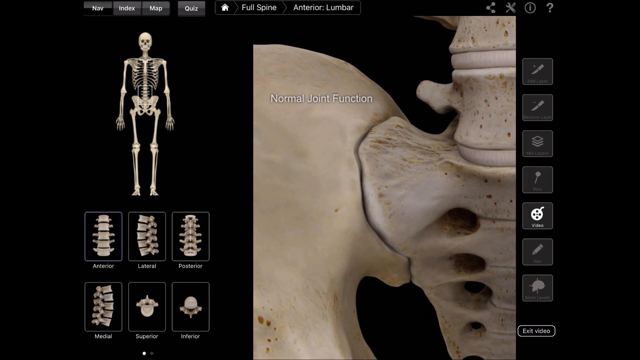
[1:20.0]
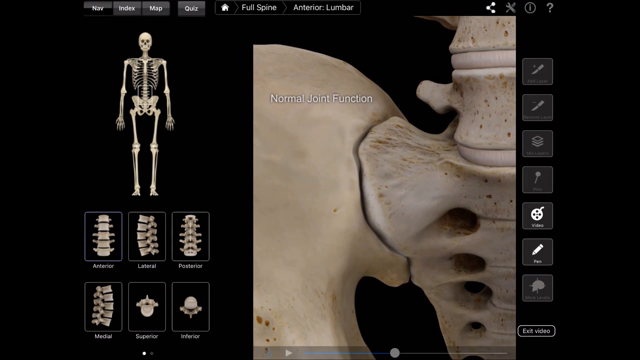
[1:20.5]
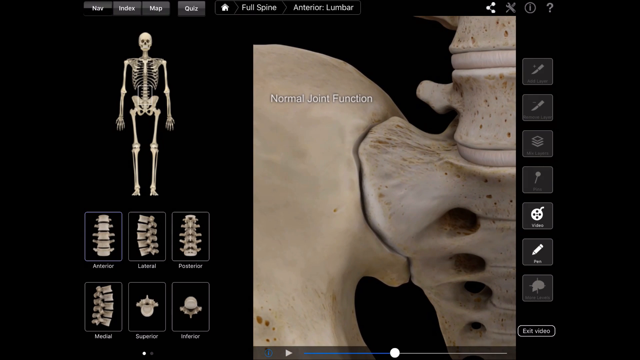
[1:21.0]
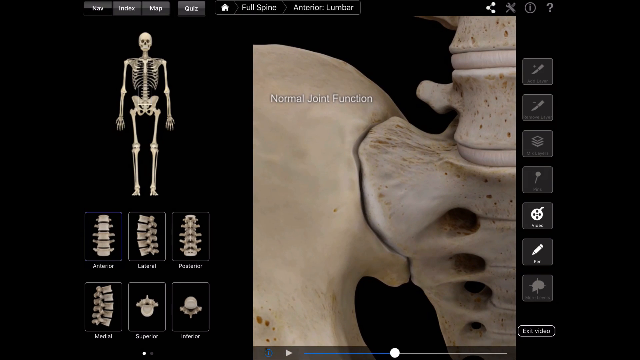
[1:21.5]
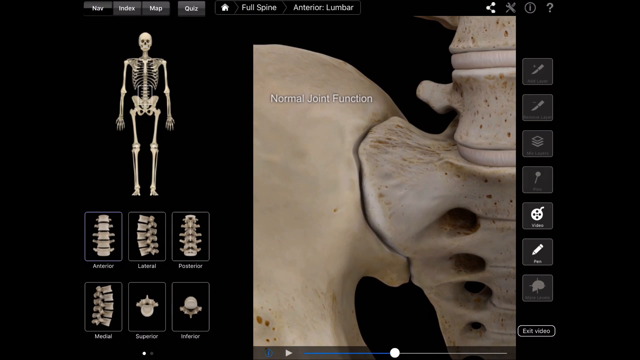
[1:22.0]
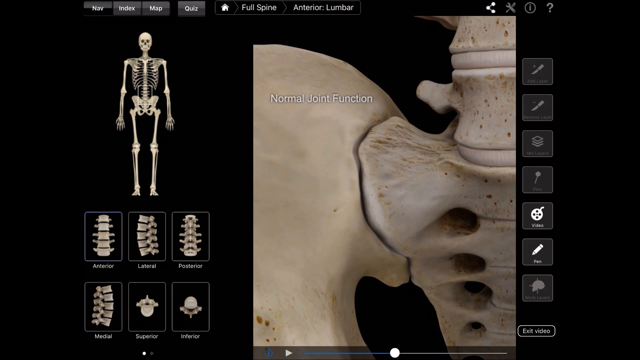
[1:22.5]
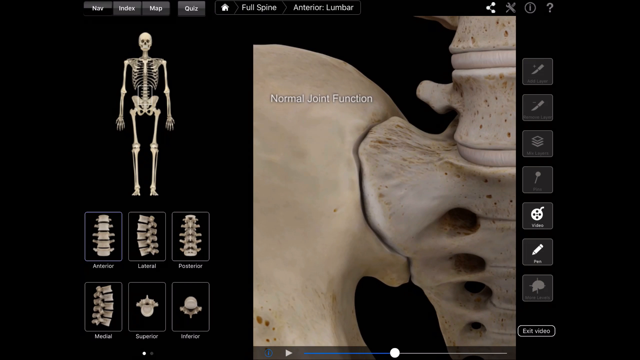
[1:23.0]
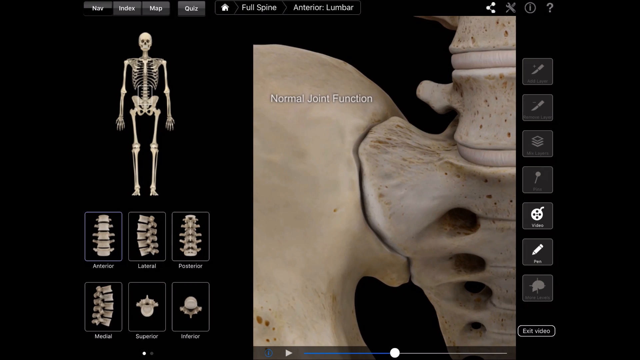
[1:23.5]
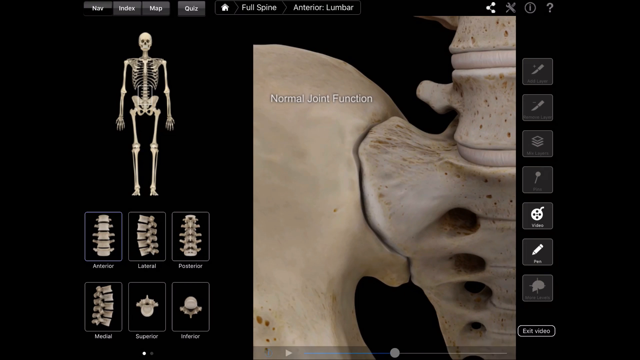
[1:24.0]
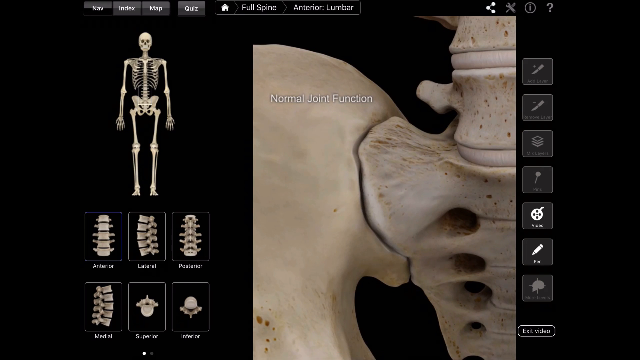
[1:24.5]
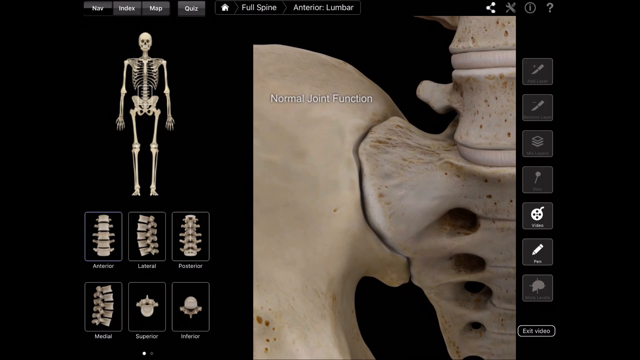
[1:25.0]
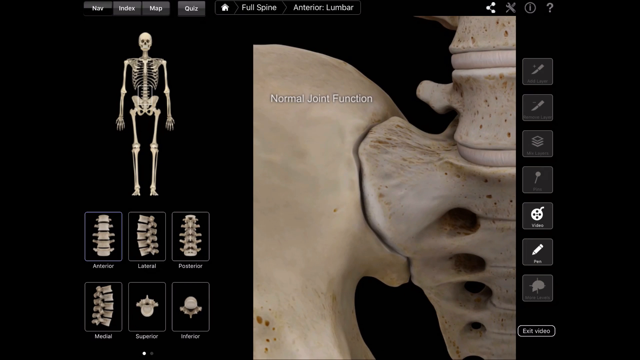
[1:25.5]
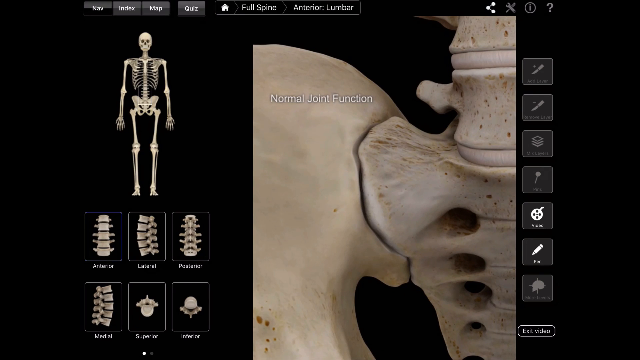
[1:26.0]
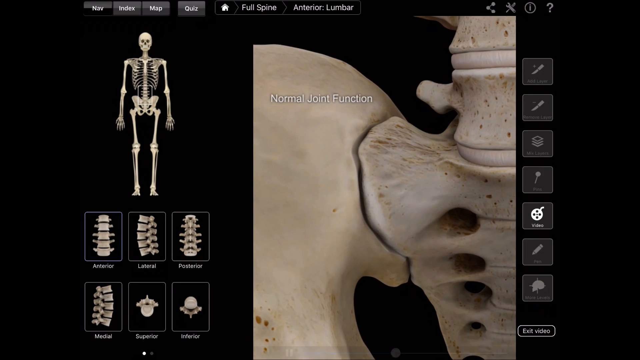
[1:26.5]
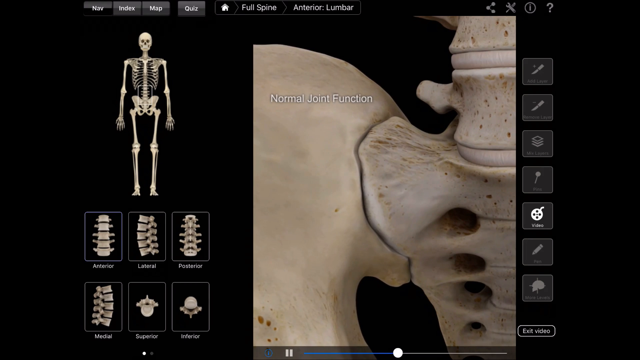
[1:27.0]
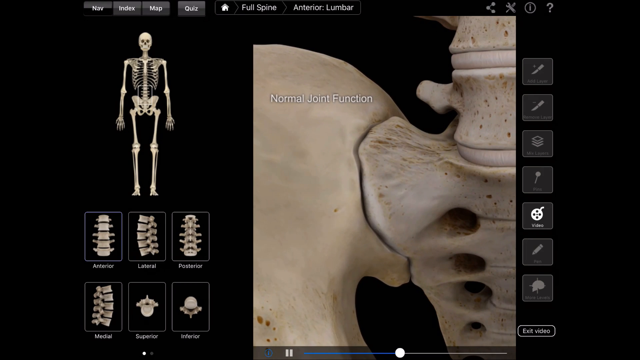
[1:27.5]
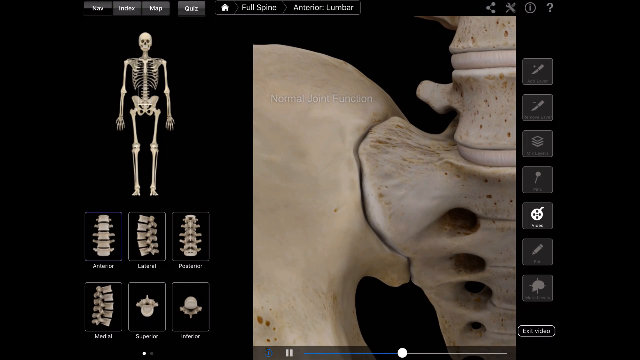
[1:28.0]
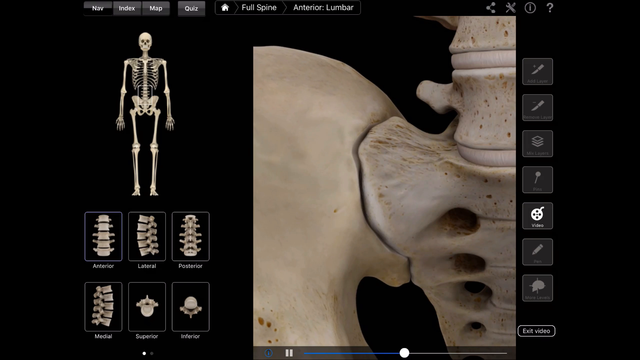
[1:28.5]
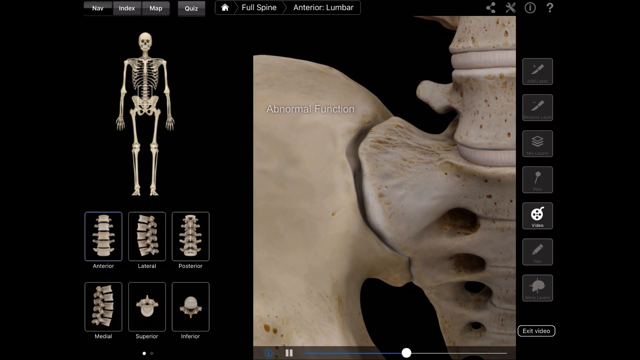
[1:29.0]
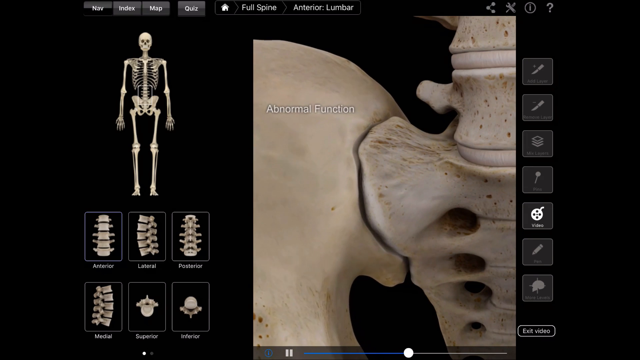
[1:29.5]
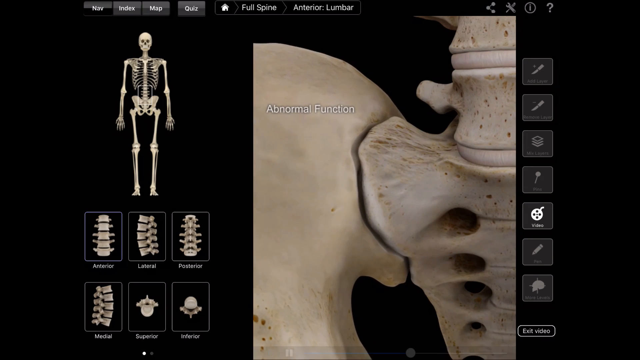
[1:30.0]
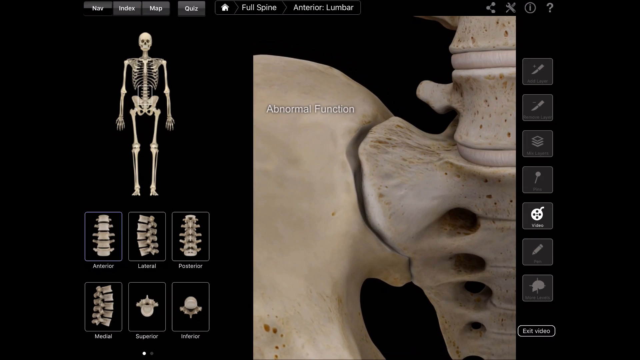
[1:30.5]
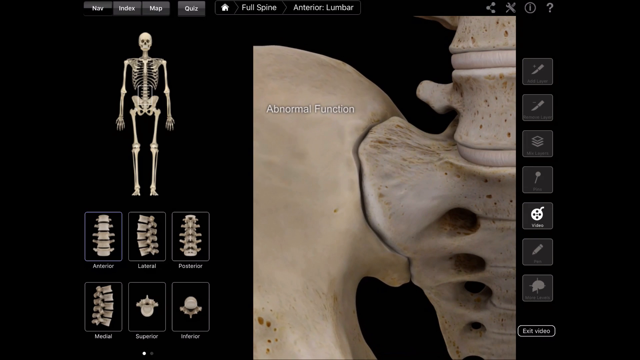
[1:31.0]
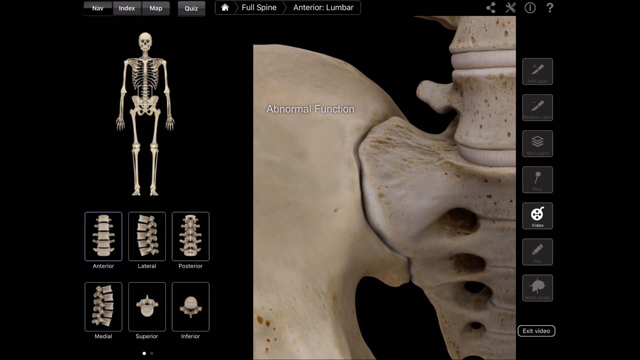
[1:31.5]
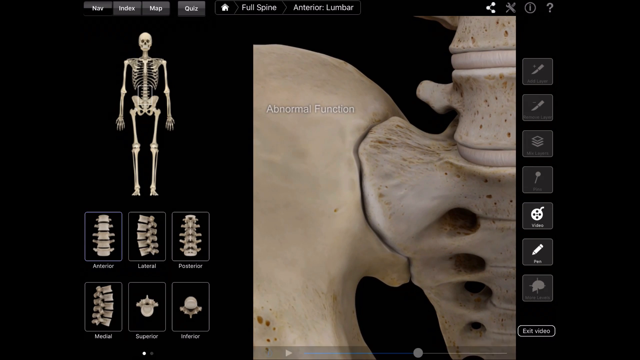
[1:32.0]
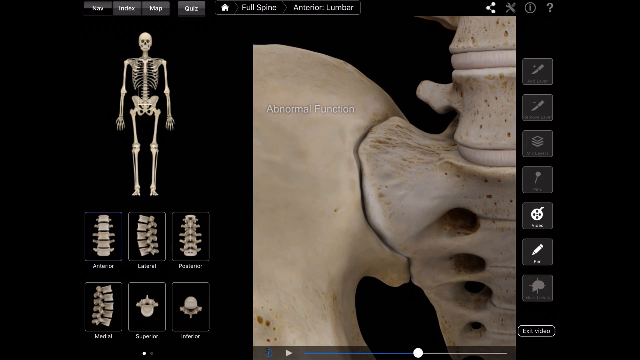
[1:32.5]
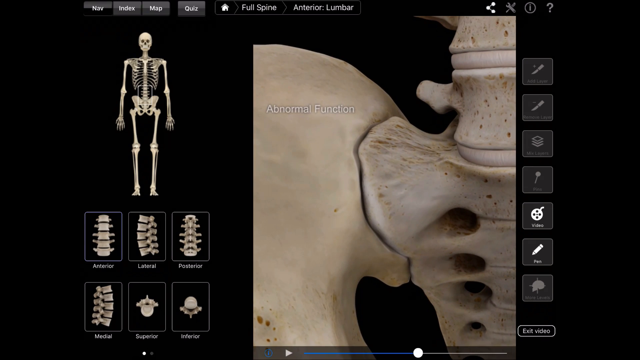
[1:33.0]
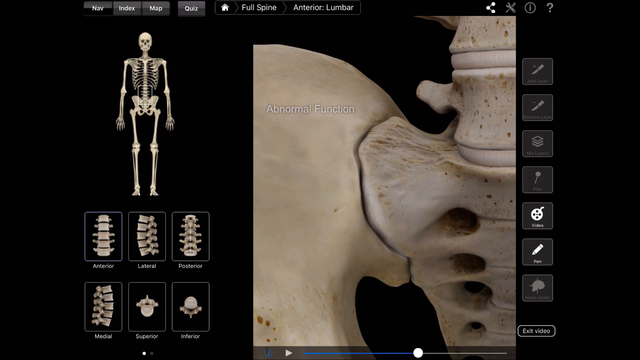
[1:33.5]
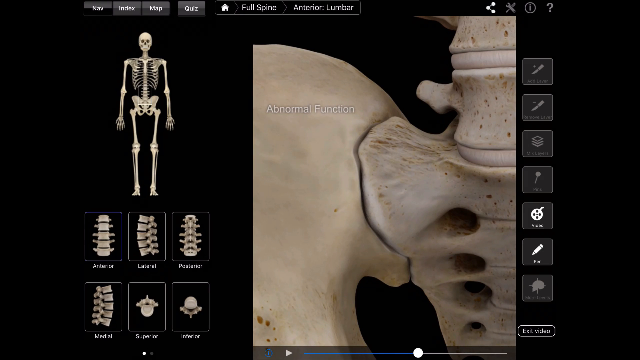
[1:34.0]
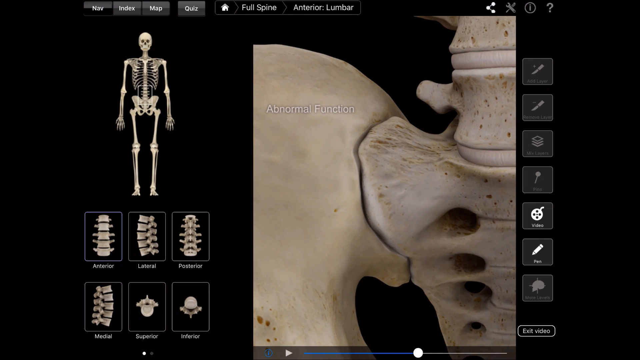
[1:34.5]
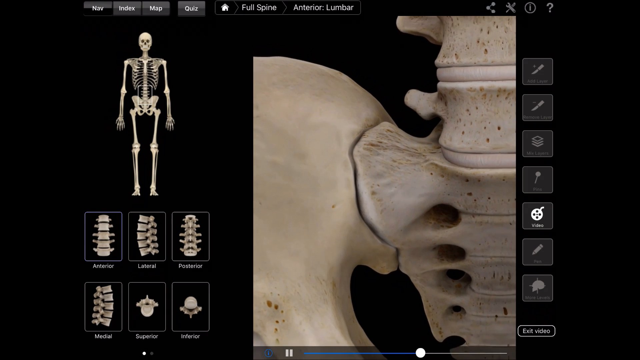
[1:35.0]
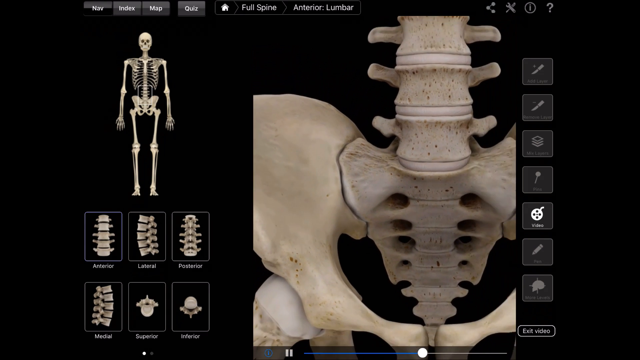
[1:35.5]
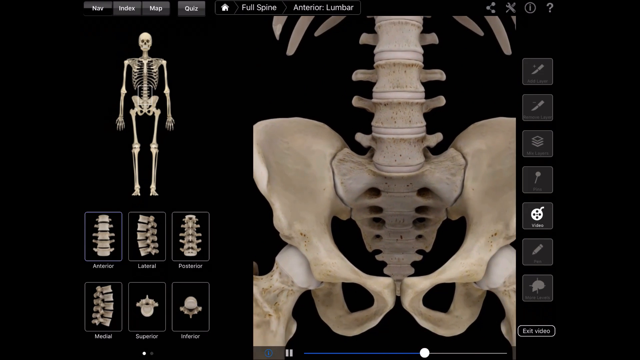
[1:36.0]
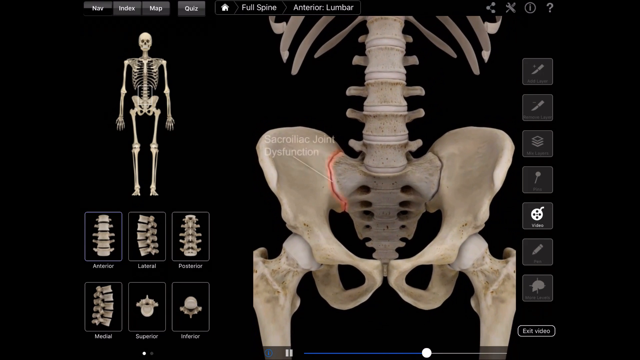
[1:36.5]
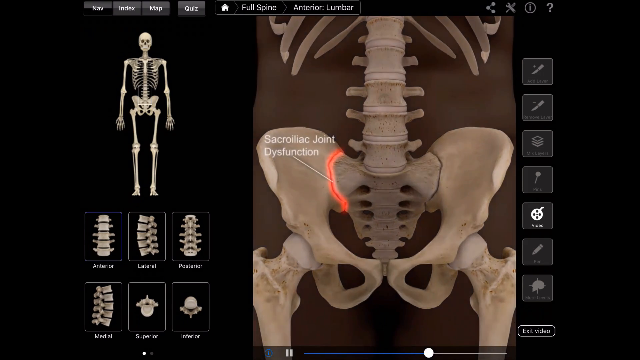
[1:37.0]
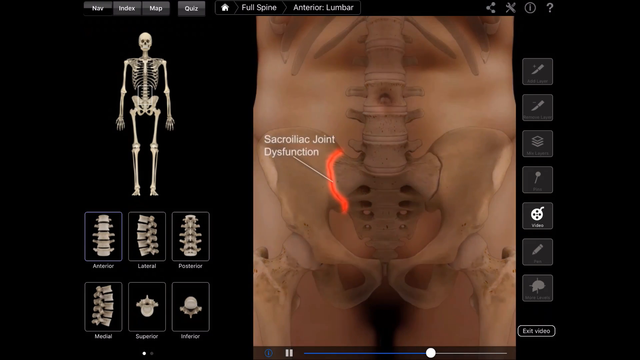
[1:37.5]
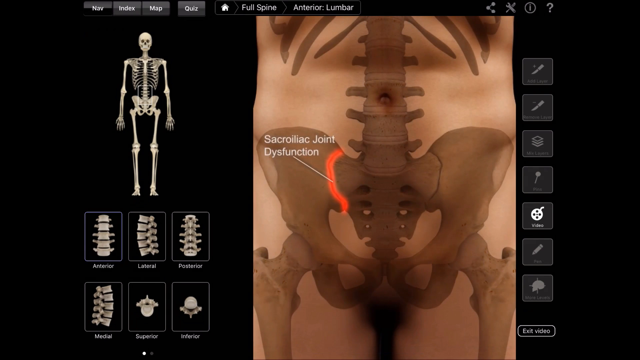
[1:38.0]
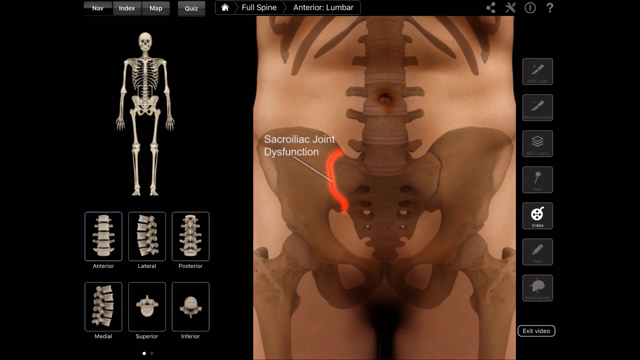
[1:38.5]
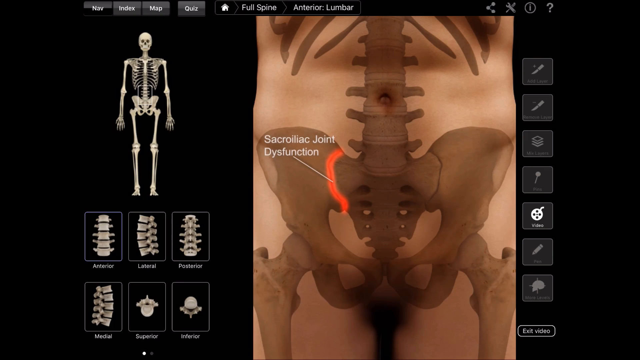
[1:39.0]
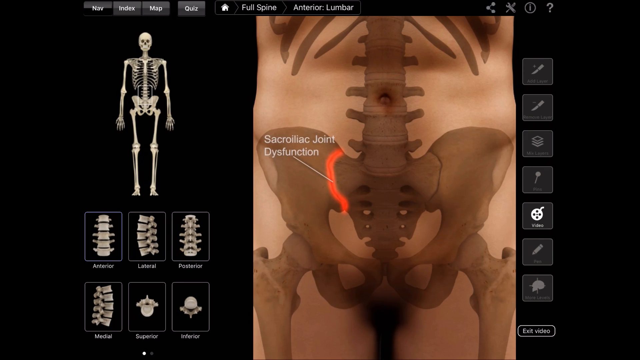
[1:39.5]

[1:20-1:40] The normal joint function continues: there is a small gap between the two bones where the joint moves, and within the first few seconds the bone moves away to highlight that gap, then moves back. Abnormal function is then shown, where the gap is not consistent; the joint seems to rock back and forth and looks very unstable. The view zooms back out, and the joint is highlighted in red to signify sacroiliac joint dysfunction.